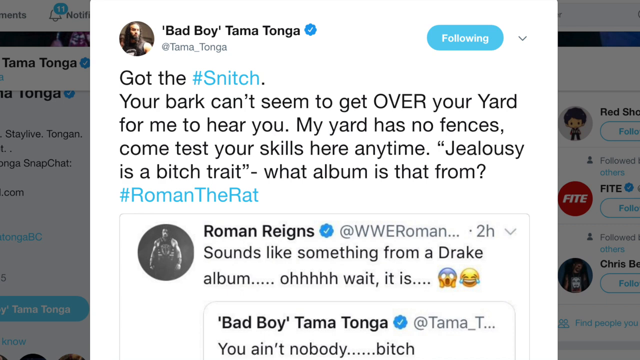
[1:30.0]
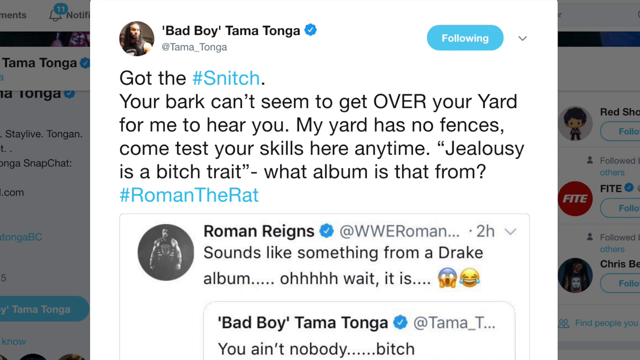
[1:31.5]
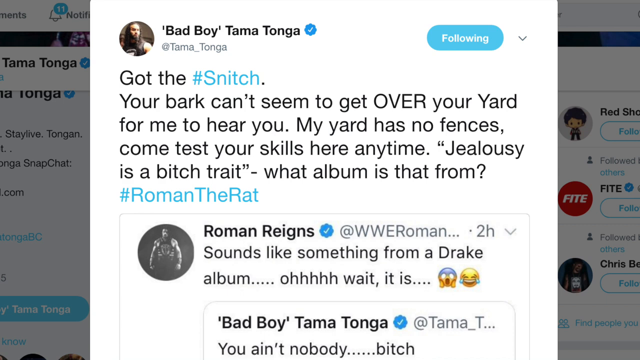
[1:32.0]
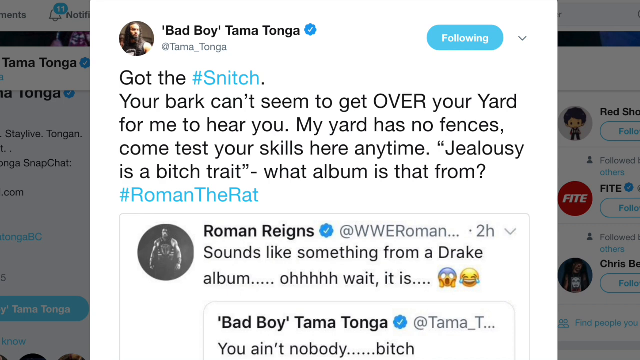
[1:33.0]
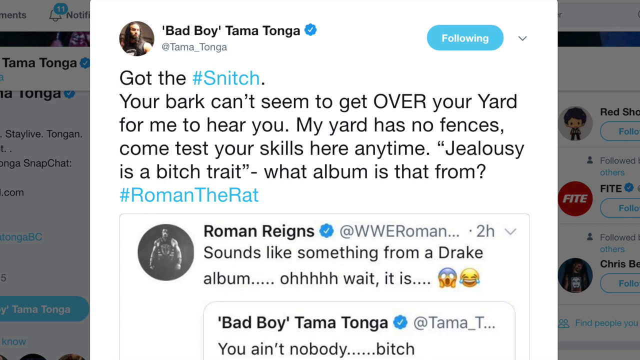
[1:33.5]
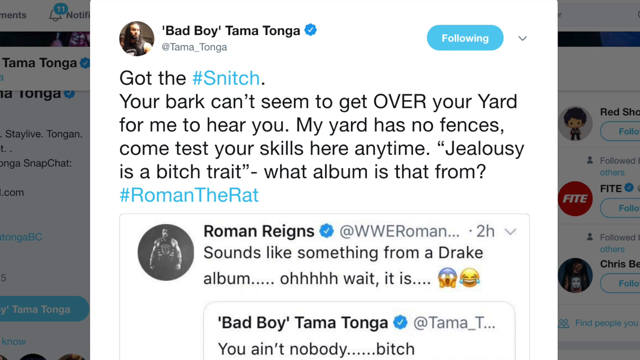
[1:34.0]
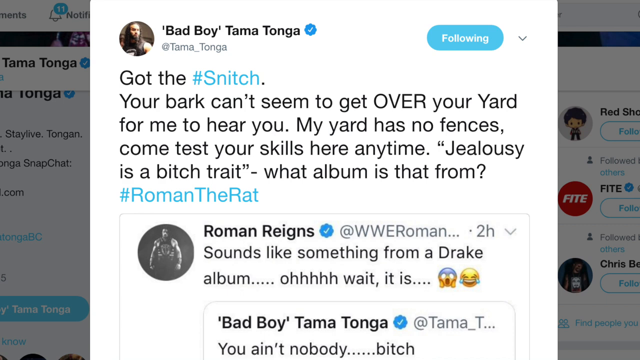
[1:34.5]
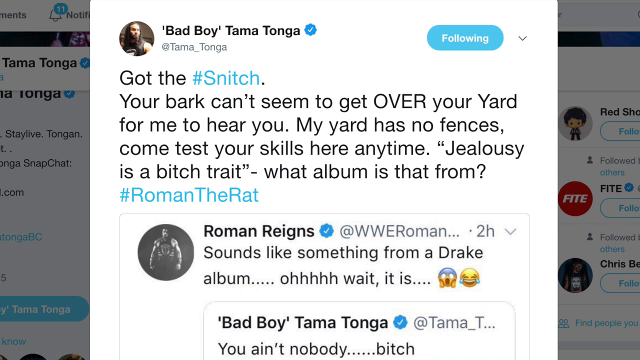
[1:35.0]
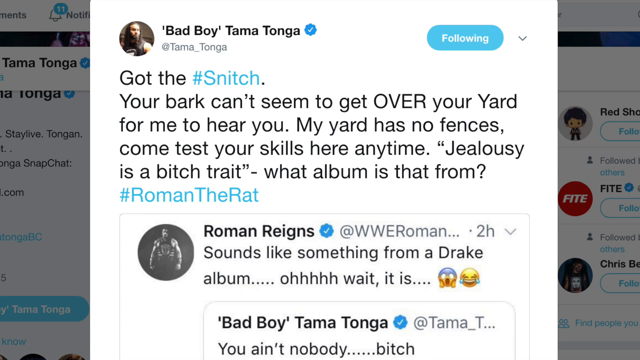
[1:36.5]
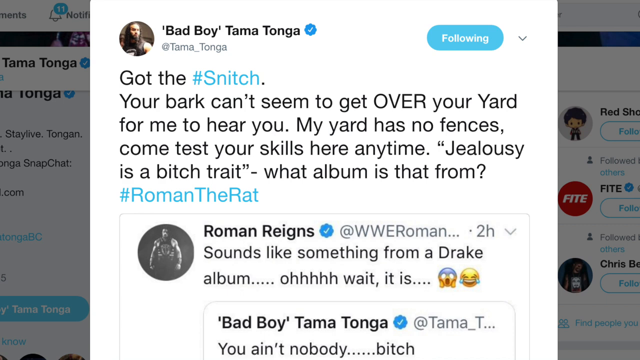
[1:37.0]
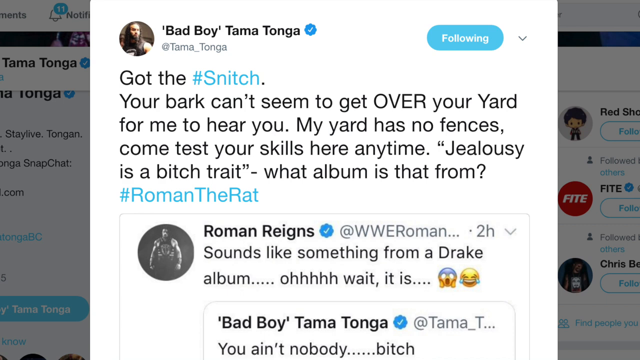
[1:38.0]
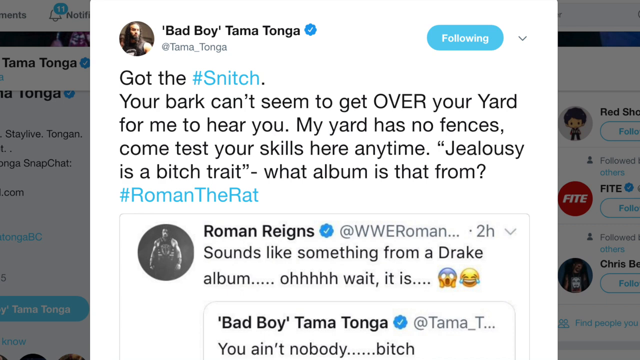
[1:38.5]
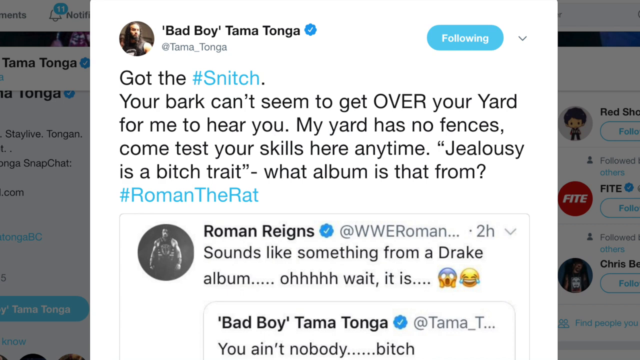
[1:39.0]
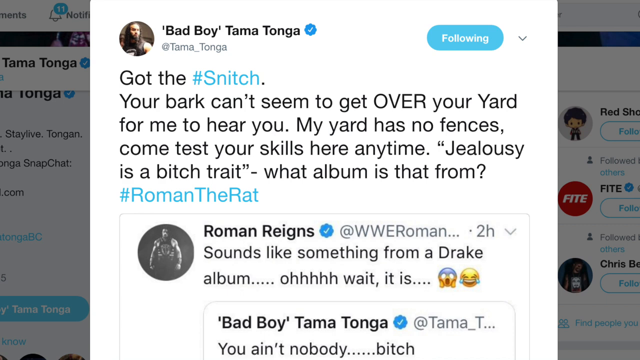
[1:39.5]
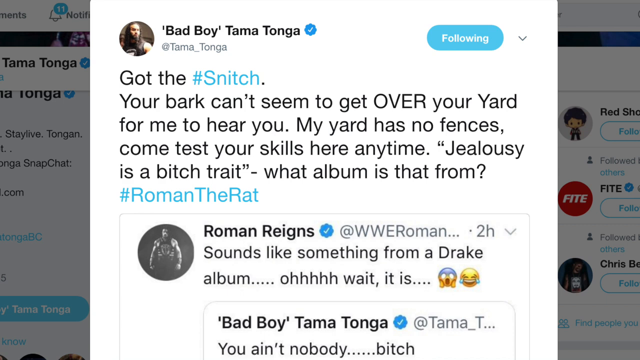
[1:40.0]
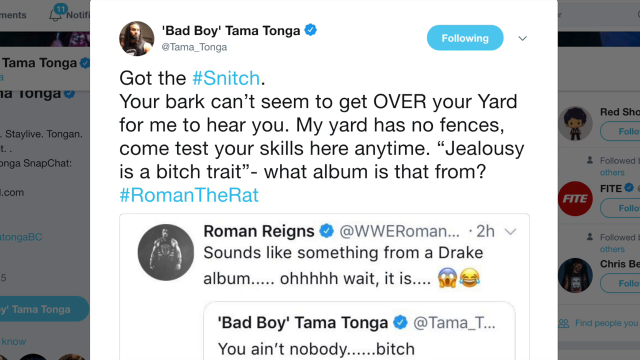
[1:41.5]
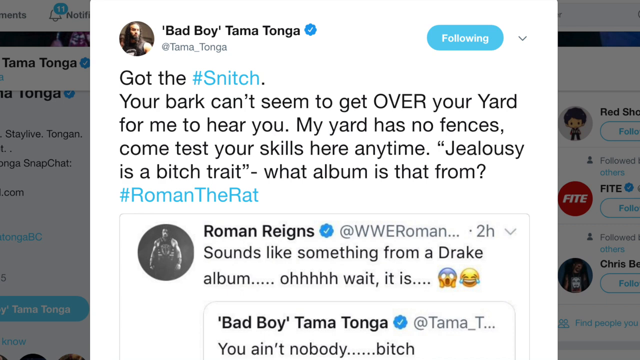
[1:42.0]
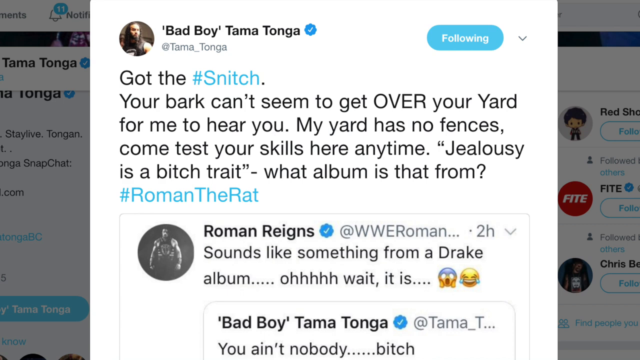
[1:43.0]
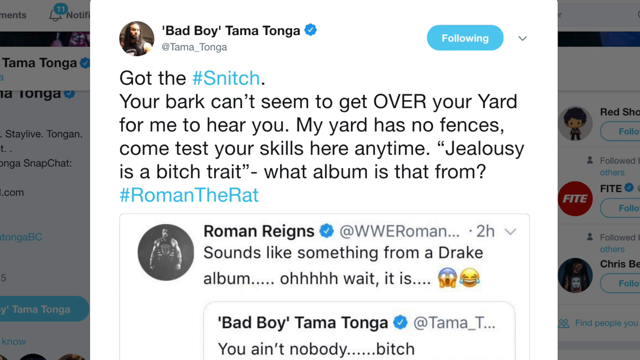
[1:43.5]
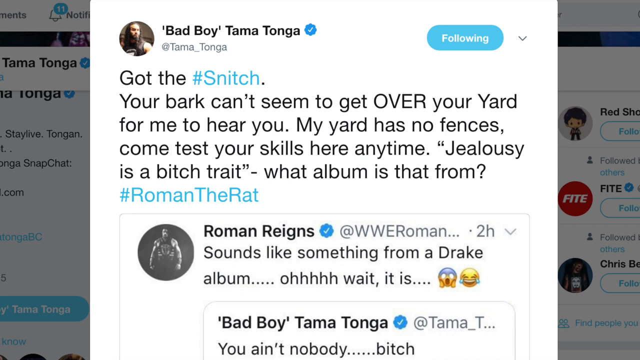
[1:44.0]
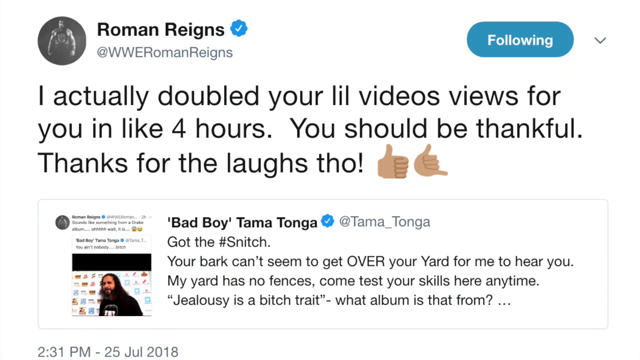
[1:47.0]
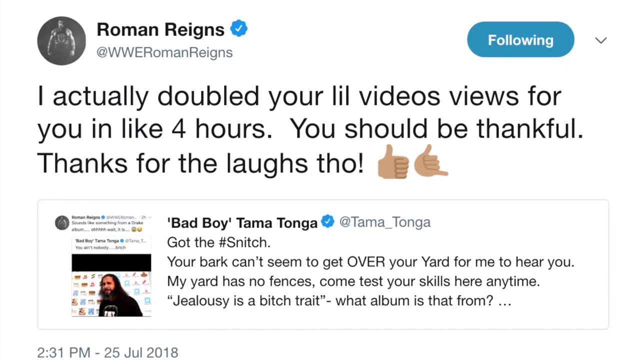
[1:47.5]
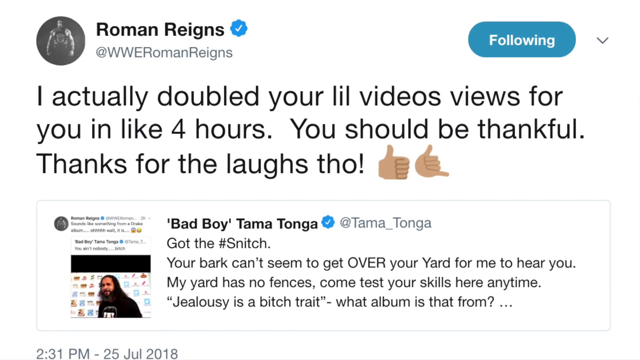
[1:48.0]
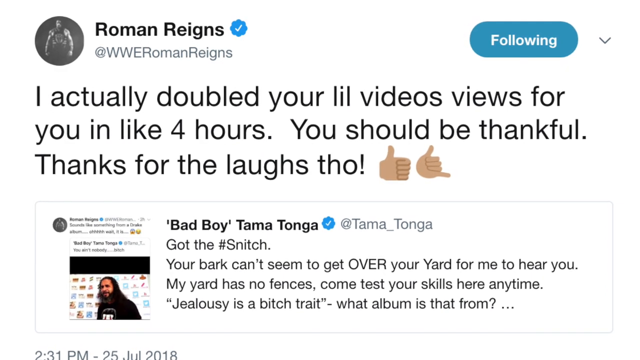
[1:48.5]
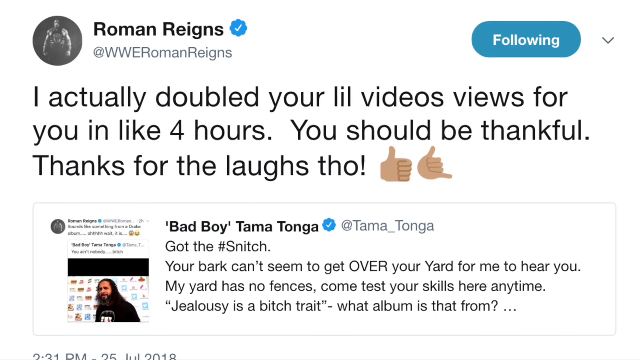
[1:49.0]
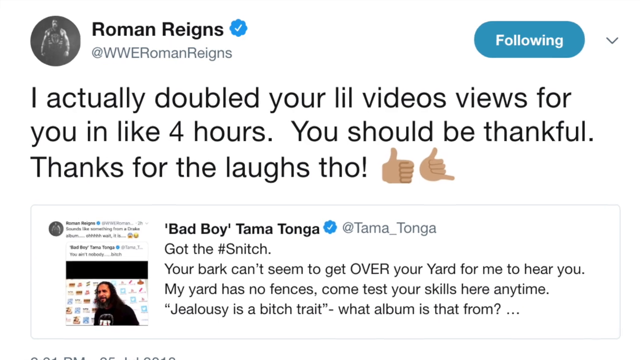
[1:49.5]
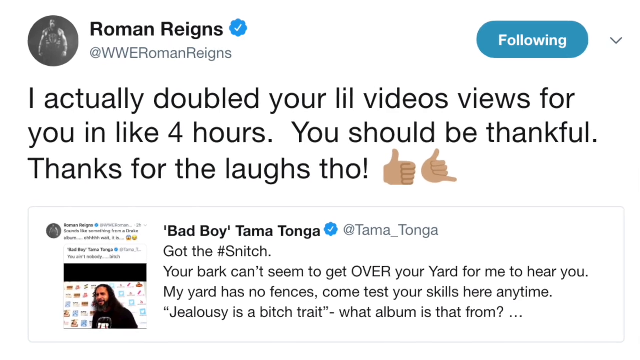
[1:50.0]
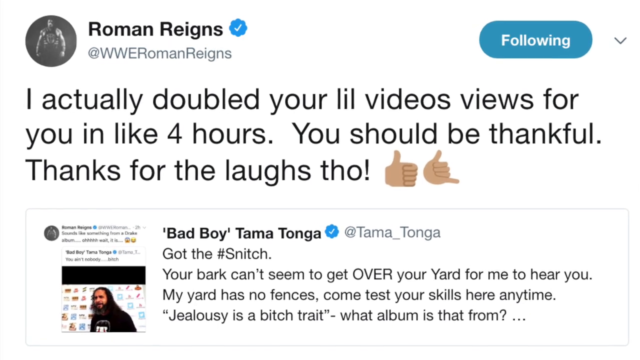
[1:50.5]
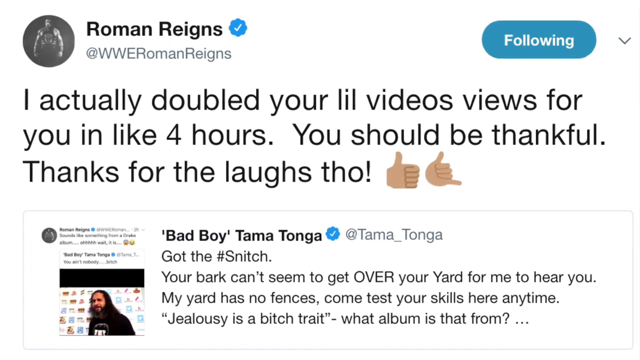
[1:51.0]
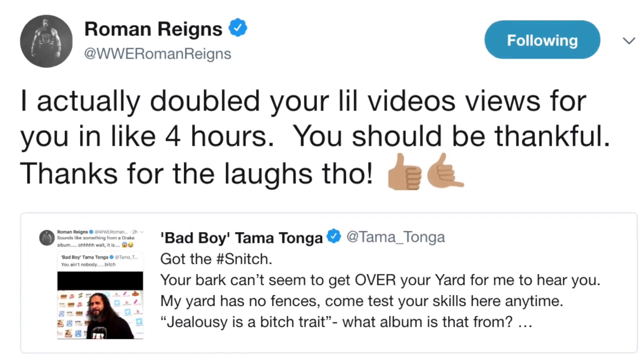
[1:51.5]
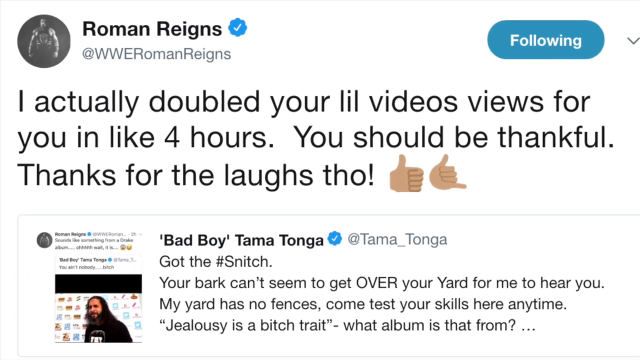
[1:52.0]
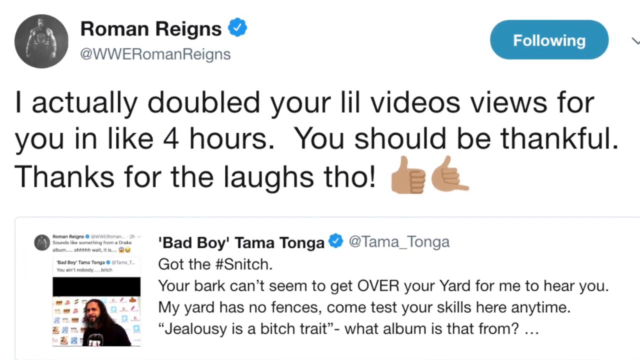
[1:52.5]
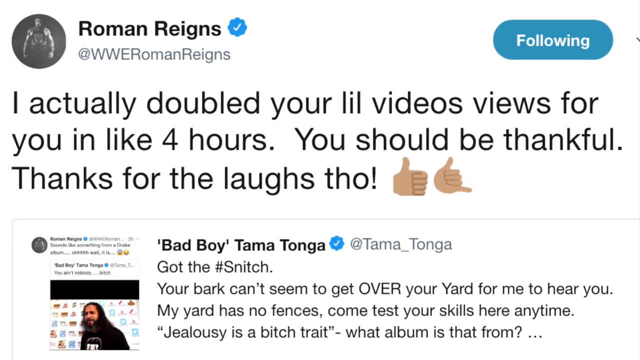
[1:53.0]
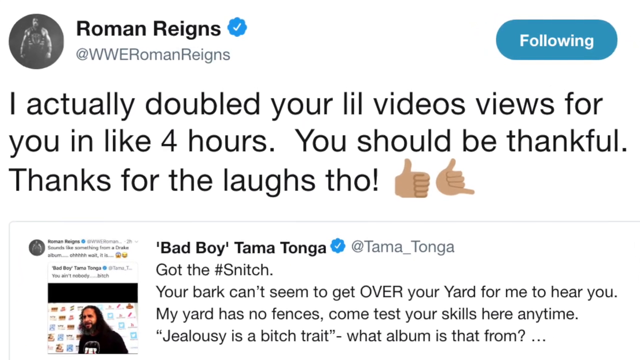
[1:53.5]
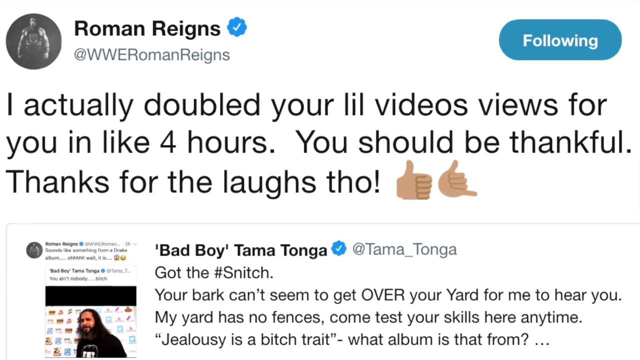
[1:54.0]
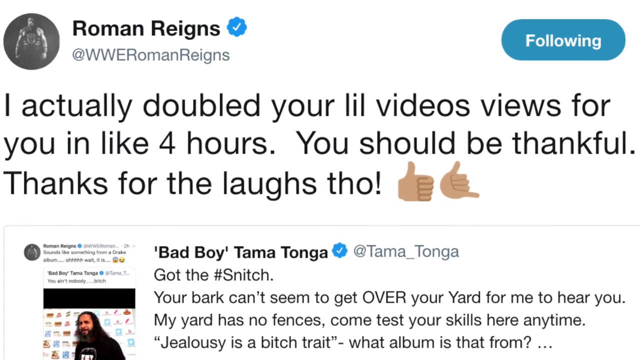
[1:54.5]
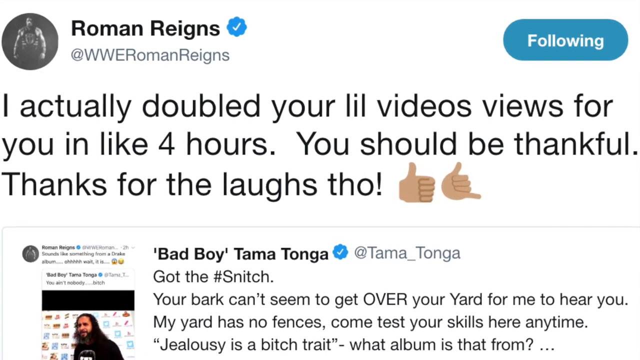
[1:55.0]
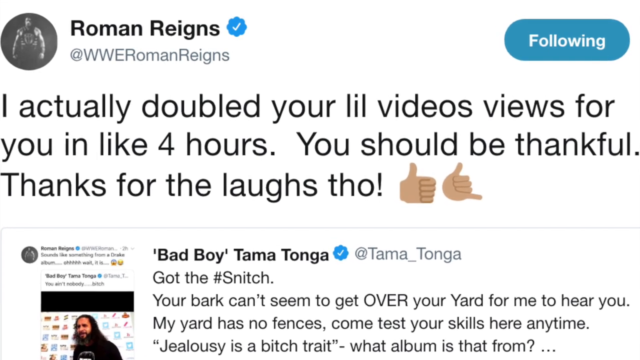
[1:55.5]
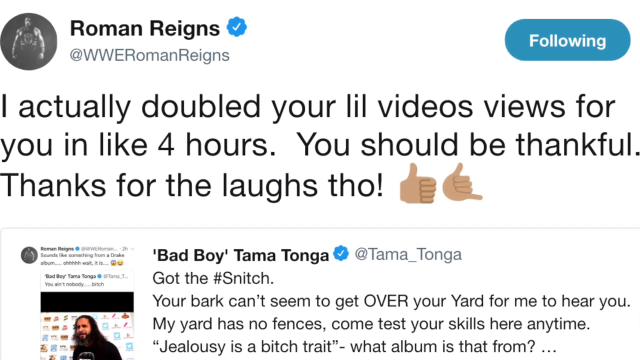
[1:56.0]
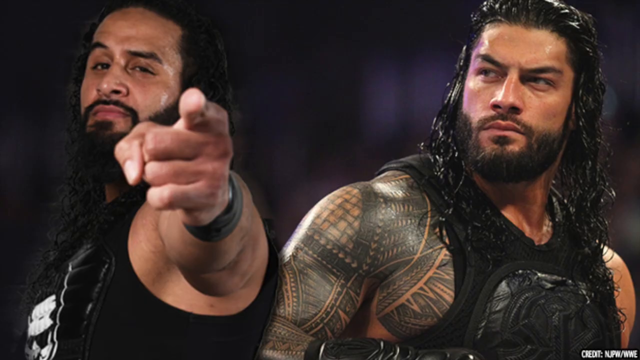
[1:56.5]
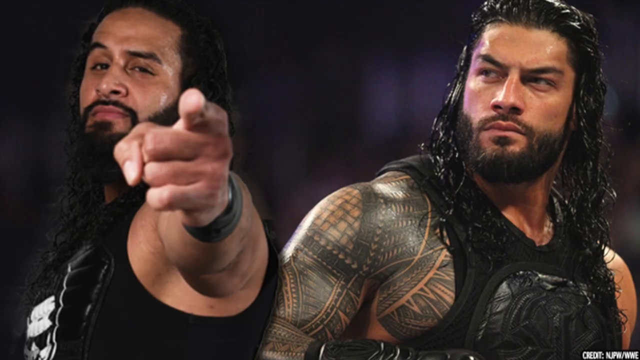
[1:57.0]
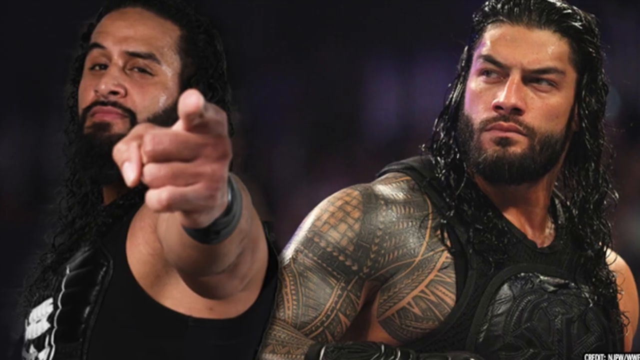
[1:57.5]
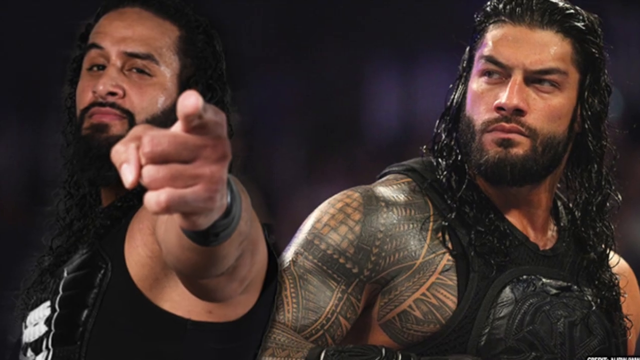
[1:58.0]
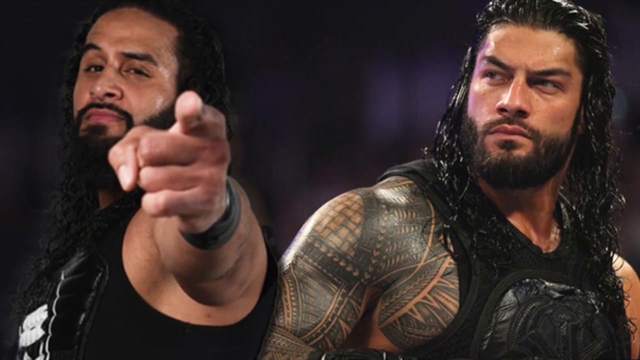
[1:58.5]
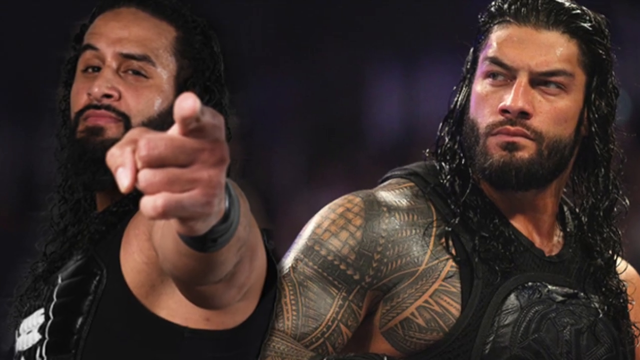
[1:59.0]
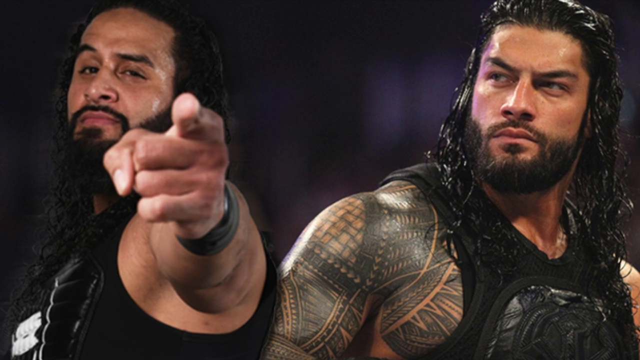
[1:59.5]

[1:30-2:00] A Twitter post by Bad Boy Tama Tonga shows a checkmark next to his name and the handle "@Tama_Tonga" underneath. The post includes the text "got the #snitch", "My yard has no fences. Come test your skills here anytime", and "Jealousy is a", followed by a cuss word and "trait". It also says "What album is that from?" and "#Roman the rat". Underneath is a retweet of a post by Roman Reigns, who has a check mark. The video cuts to another tweet from Roman Reigns that says "I actually doubled your little video views for you in like four hours. You should be thankful", followed by two emojis: one is a thumbs up, and the other looks like a thumbs up with the pinky out. Underneath is a retweet by Bad Boy Tama Tonga, and the camera kind of zooms in on the post.